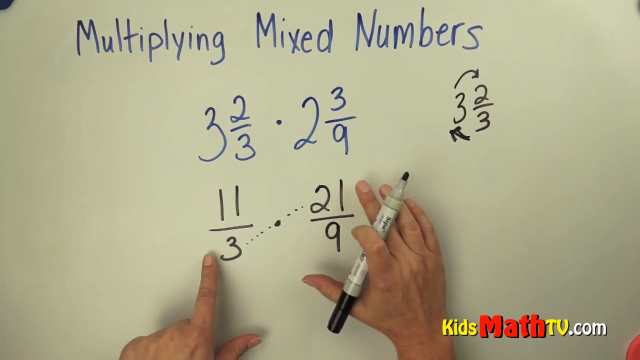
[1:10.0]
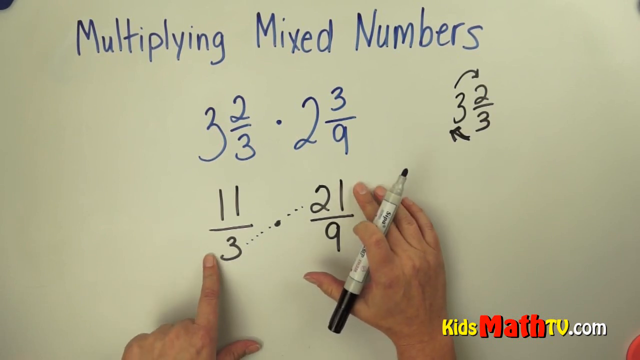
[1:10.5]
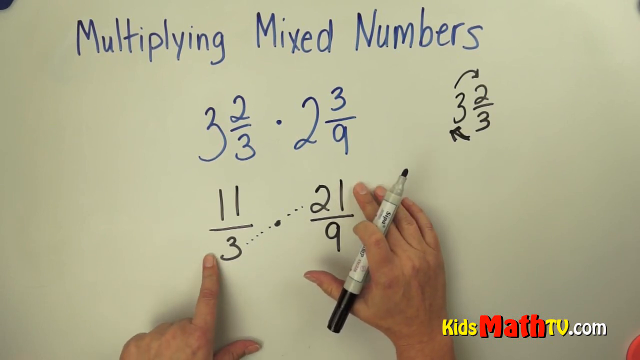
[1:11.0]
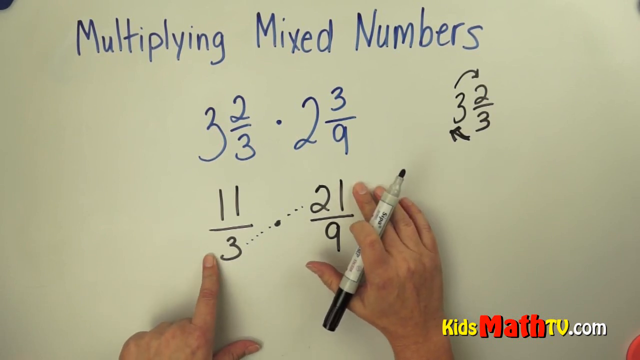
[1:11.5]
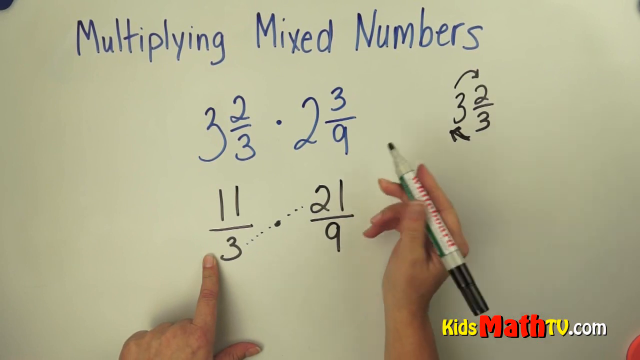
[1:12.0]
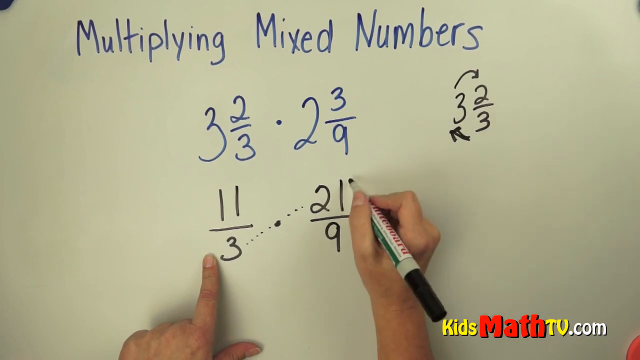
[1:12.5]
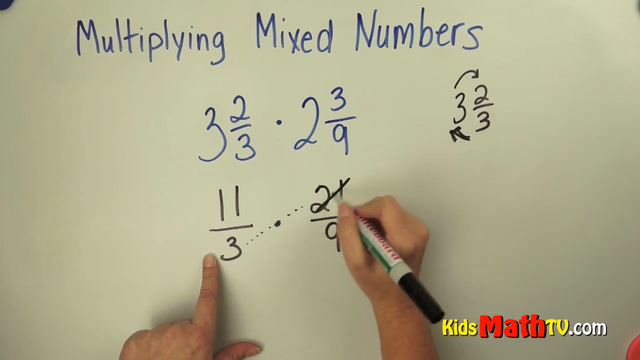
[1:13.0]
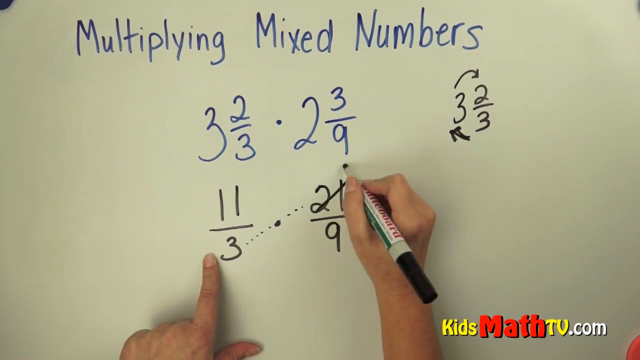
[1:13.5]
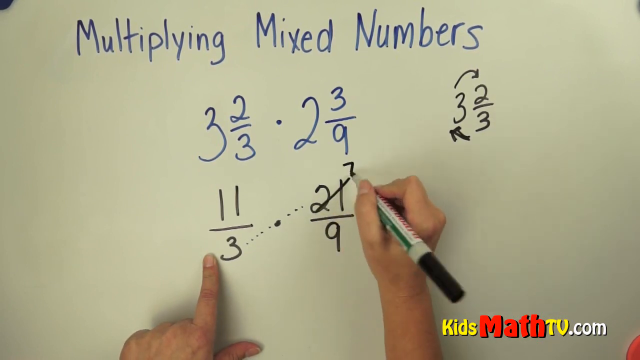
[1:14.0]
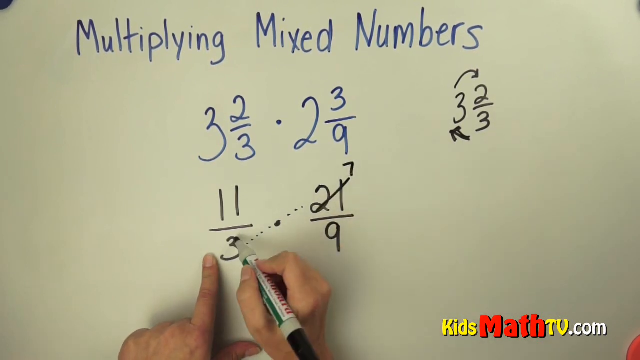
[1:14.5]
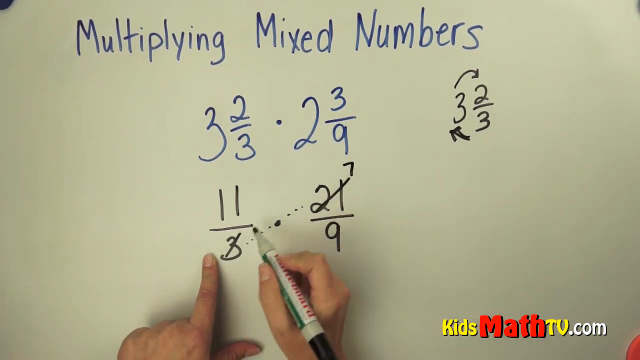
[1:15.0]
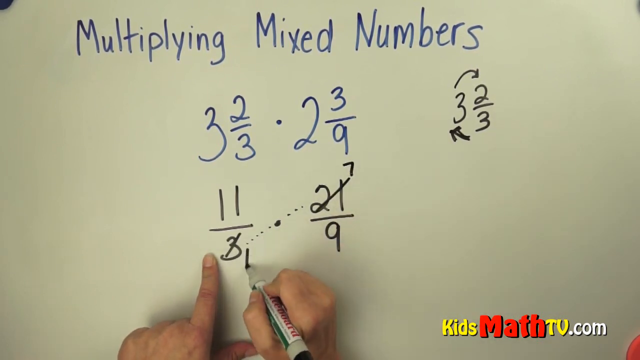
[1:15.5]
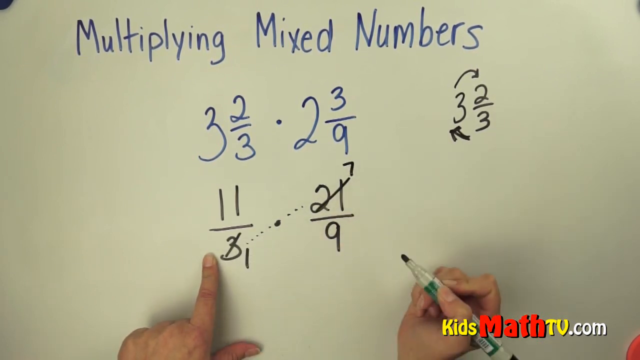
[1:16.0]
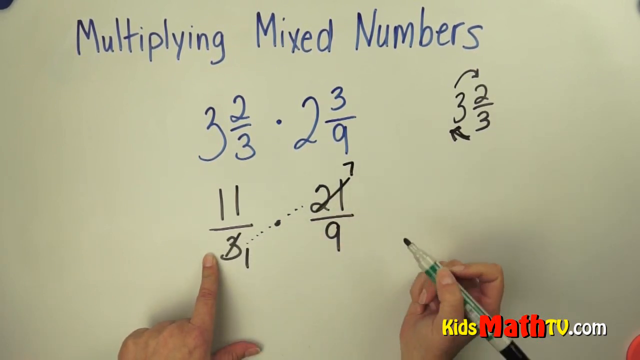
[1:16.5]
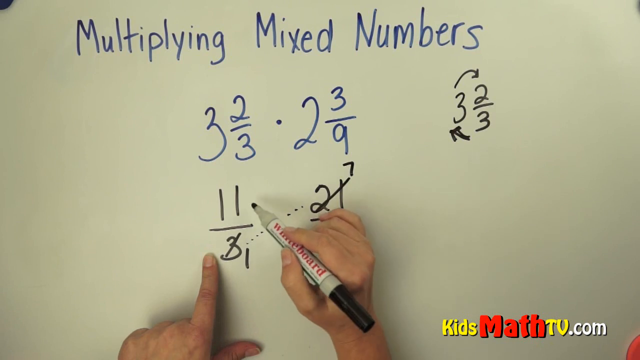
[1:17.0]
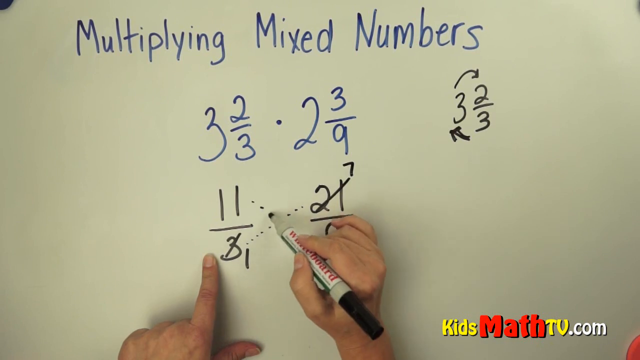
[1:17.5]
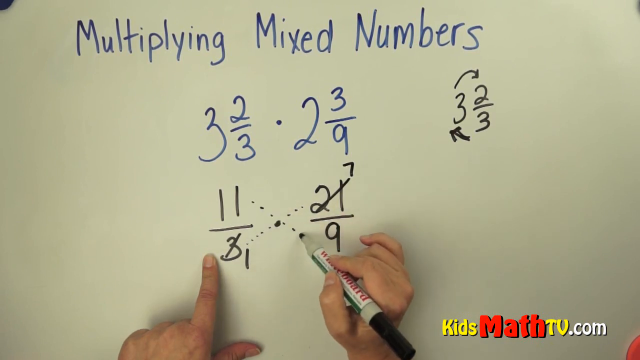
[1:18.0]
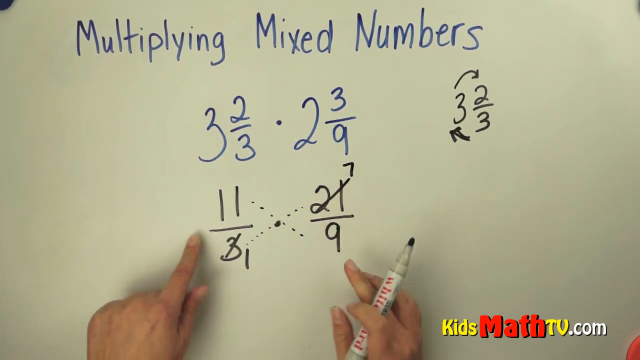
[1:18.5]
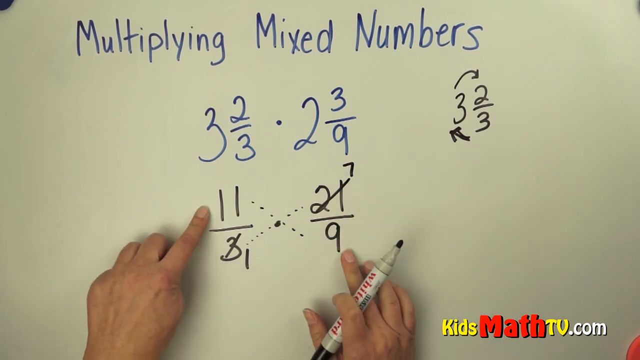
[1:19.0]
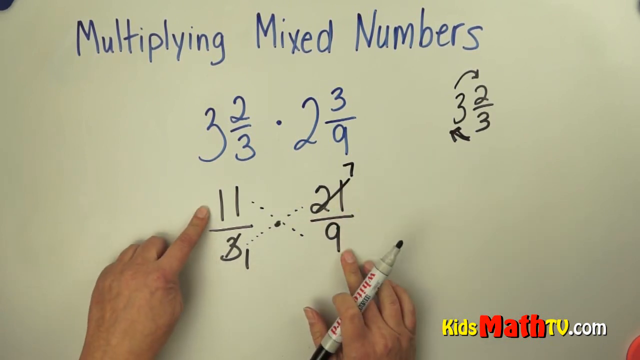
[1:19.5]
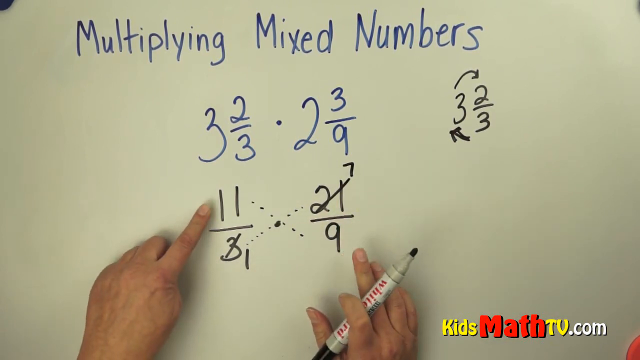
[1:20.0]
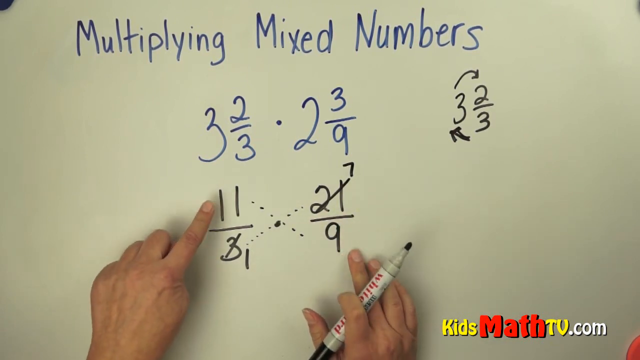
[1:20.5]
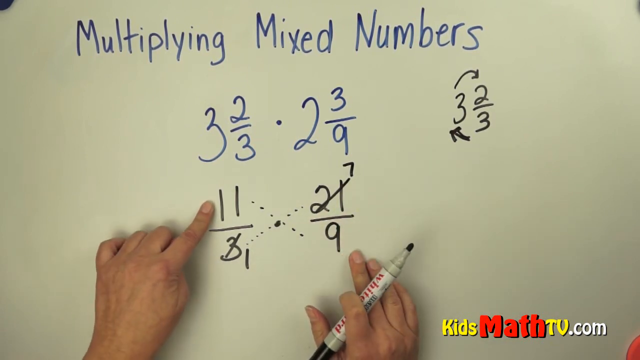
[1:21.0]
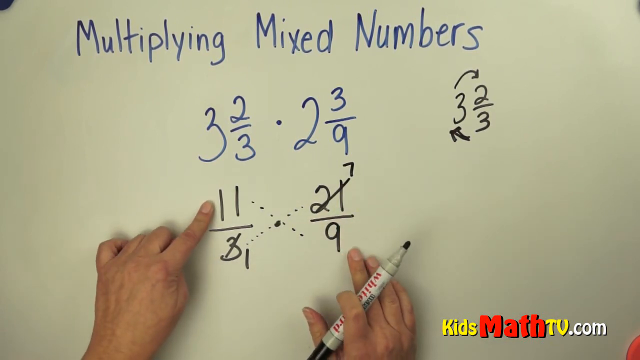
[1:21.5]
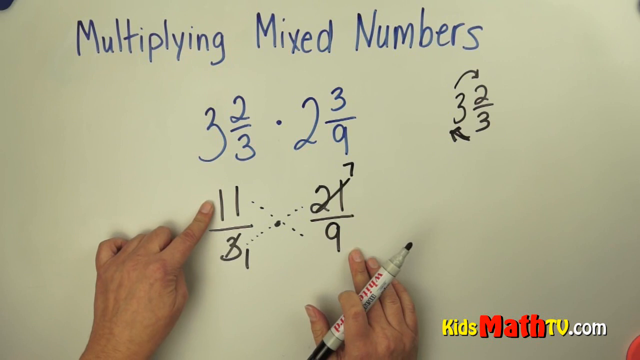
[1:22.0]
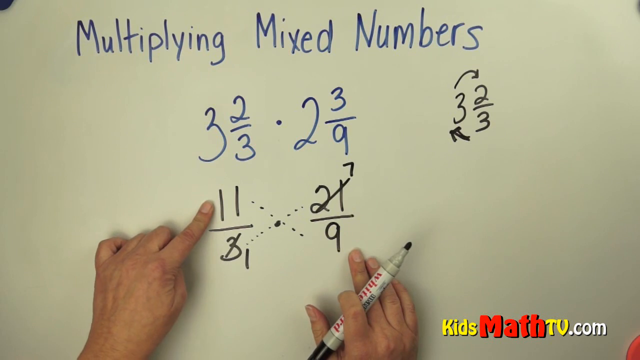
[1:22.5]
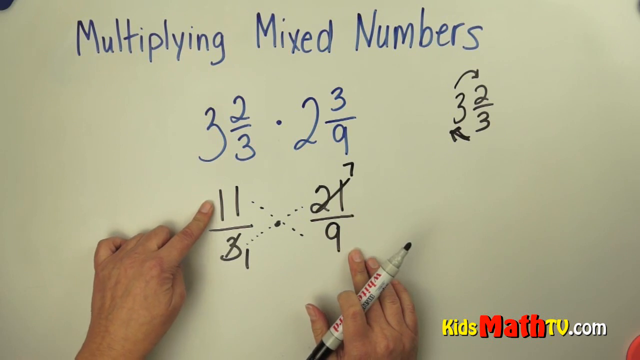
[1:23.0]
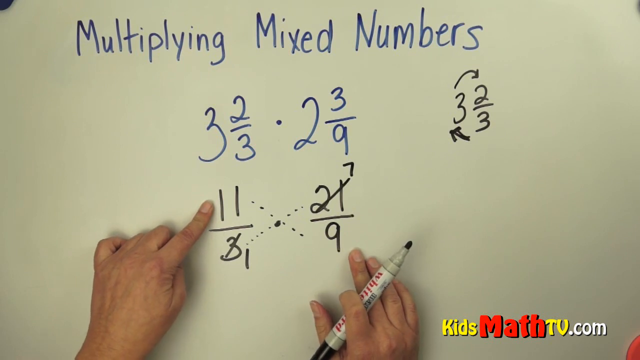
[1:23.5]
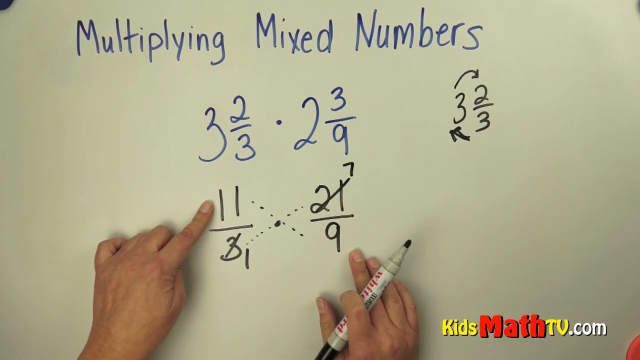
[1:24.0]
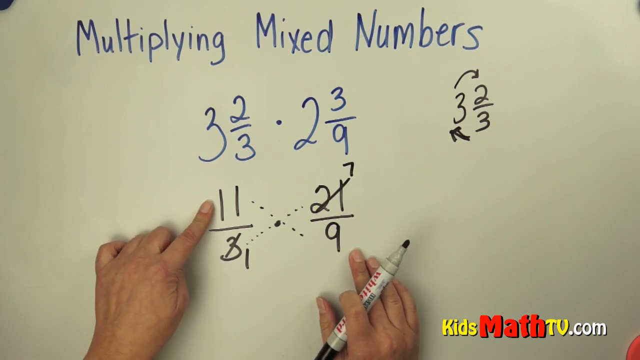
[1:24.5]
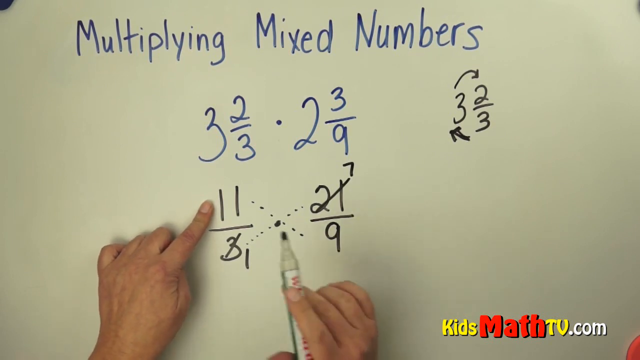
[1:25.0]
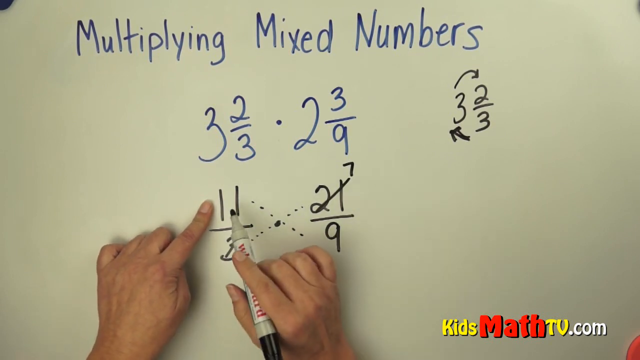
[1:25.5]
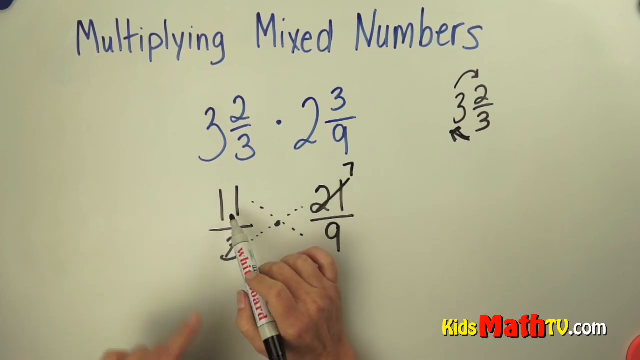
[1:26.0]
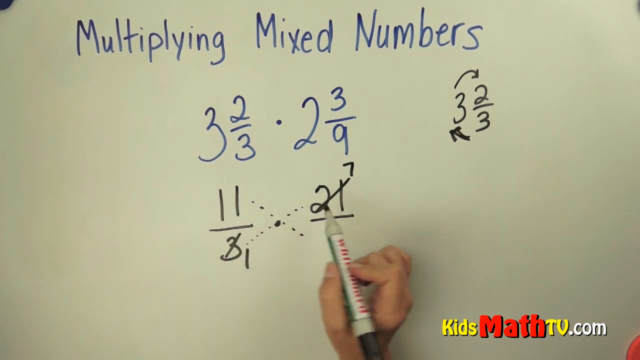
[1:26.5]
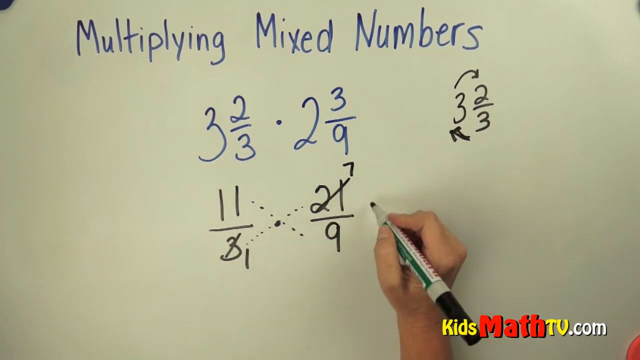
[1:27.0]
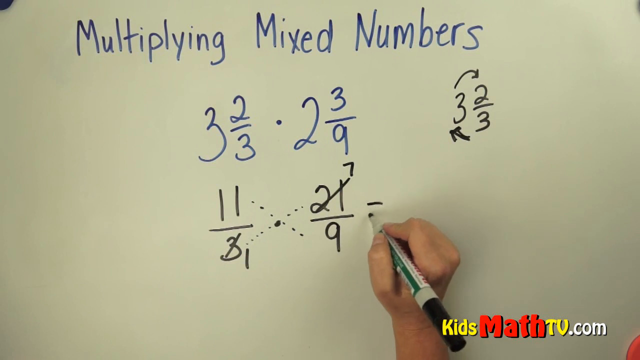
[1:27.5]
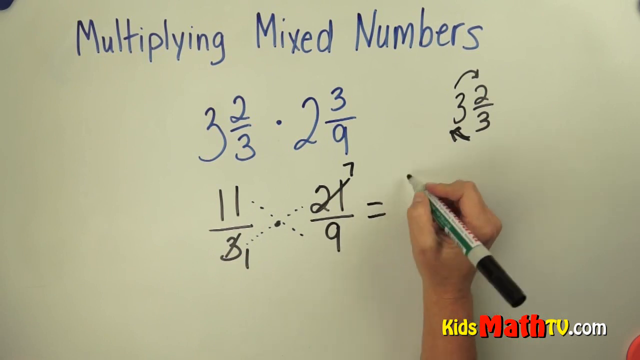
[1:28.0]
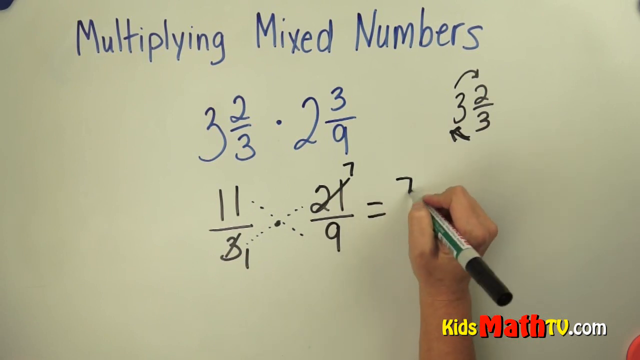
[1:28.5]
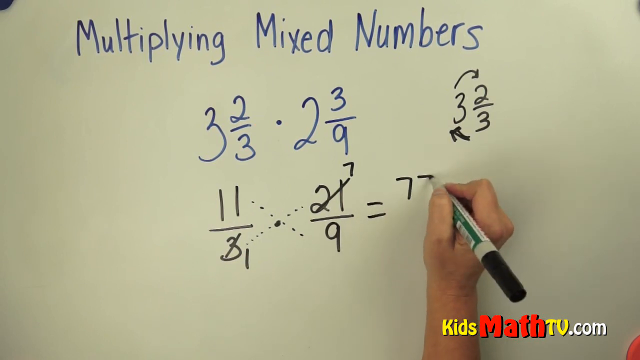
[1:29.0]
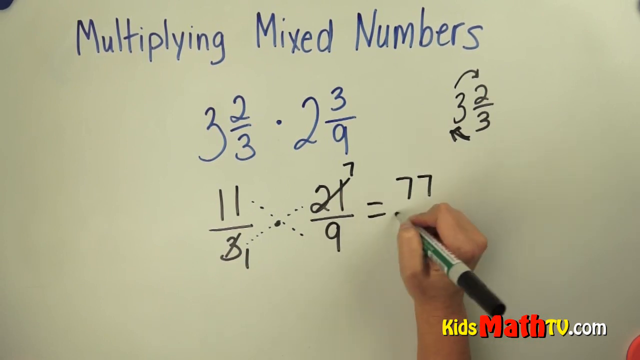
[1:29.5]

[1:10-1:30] The whiteboard shows the blue text "Multiply Mixed Numbers", with three and two thirds and two and three ninths in blue below it. Beneath them are the black fractions eleven over three and twenty one over nine, the conversions of the blue numbers, with a dashed line between the denominator of the first black fraction and the numerator of the second. A right hand holds a felt tip pen between the index finger and thumb, while the index finger of the left hand points to the first black fraction. The right hand crosses out the numerator twenty one and writes a small seven just above it, then crosses out the denominator three of the first fraction and replaces it with a one. It draws a dashed line from the numerator eleven to the denominator nine. The left hand points at the numerator of the first fraction. The right hand then adds an equal sign after the second black fraction and writes seventy seven.